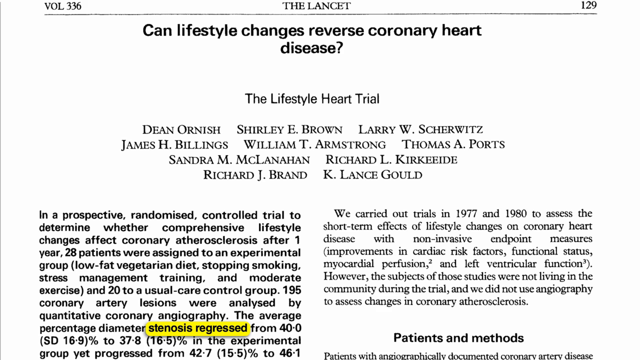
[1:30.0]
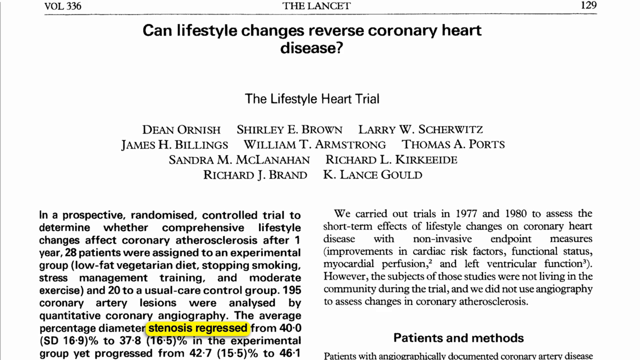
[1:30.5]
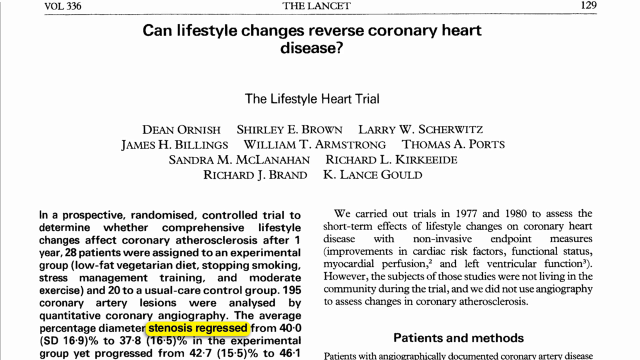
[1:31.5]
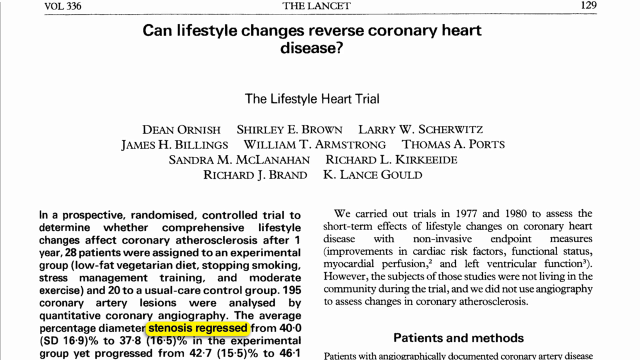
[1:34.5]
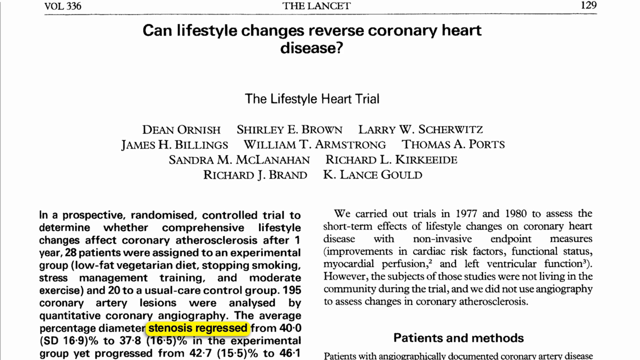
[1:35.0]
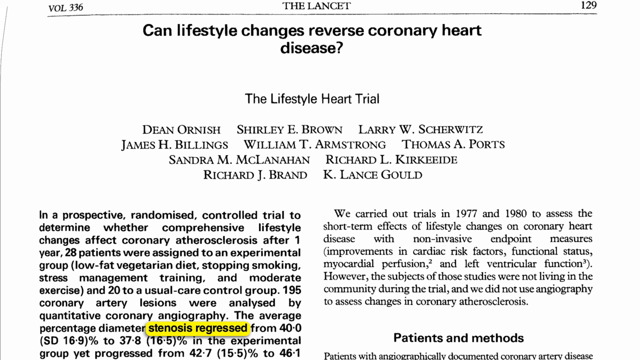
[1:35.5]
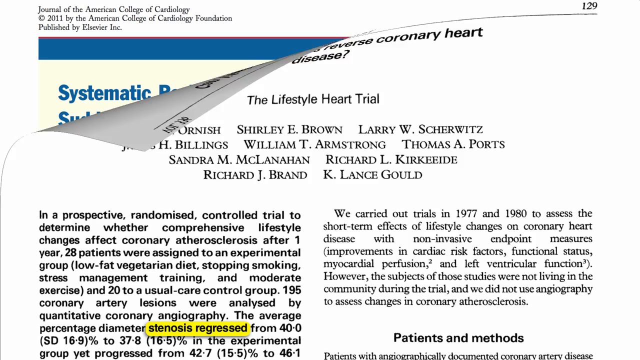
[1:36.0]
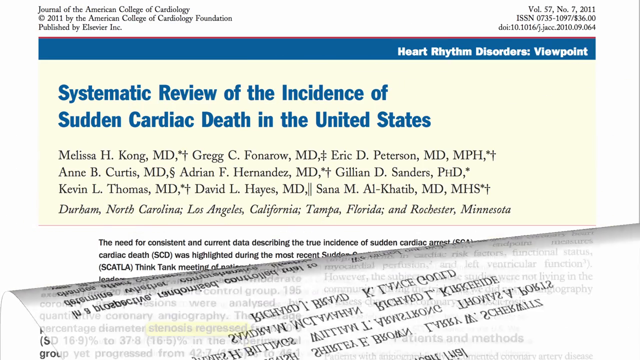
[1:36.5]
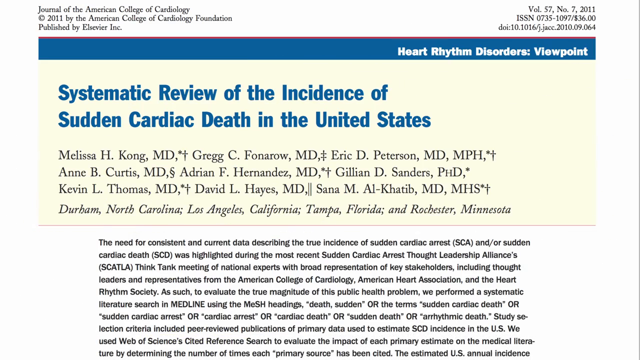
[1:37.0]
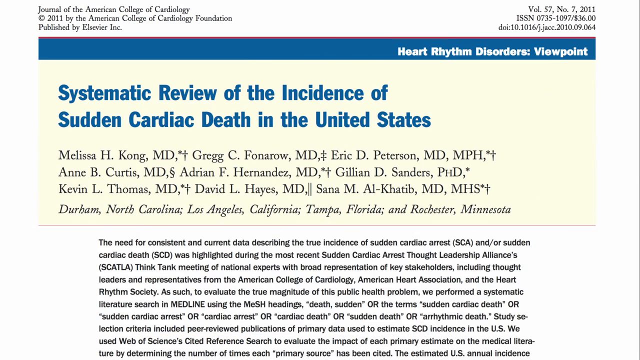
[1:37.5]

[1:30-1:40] The article titled "Can lifestyle changes reverse coronary artery" disease is still shown, then the view flips to the next article, apparently the last of this article. The new title ends "Review of the Incidence of Sudden Cardiac Death in the United States". In the upper left corner is "the Journal of American College of Cardiology", "© 2011 by American College of Cardiology Foundation", and beneath that "Published by" followed by a word beginning with E that cannot be fully read, and "Inc." On the right side is "VOL. 57, NO. 7, 2011", with "ISSN" below it followed by what looks like "0735-1097" and more that cannot be read. Beneath that is a line, only partly readable, that includes 2010 and 9. The body text below is about heart disease.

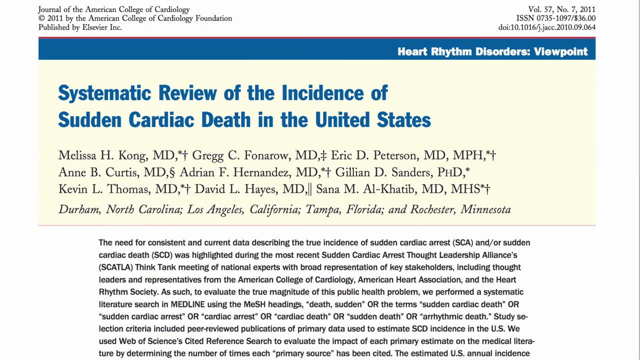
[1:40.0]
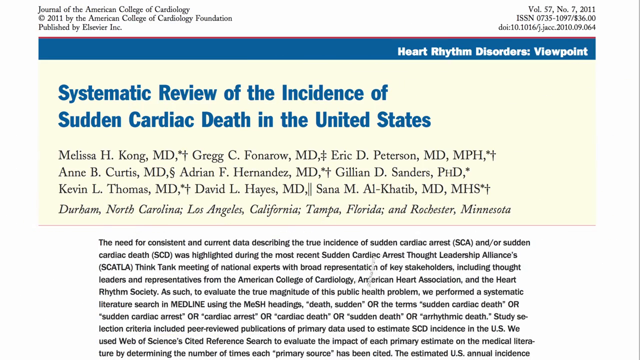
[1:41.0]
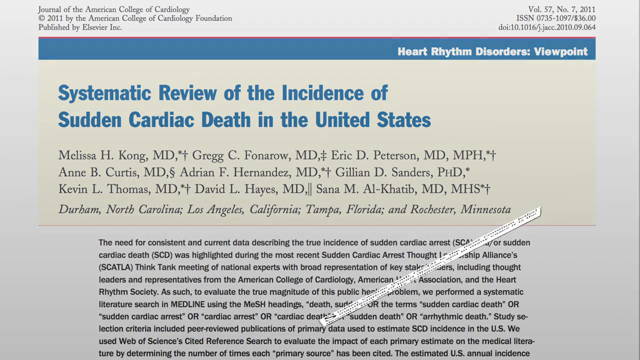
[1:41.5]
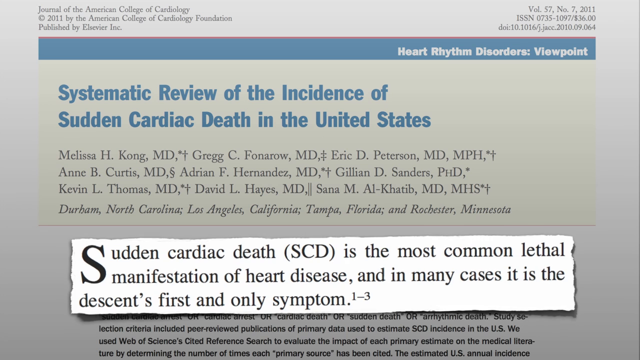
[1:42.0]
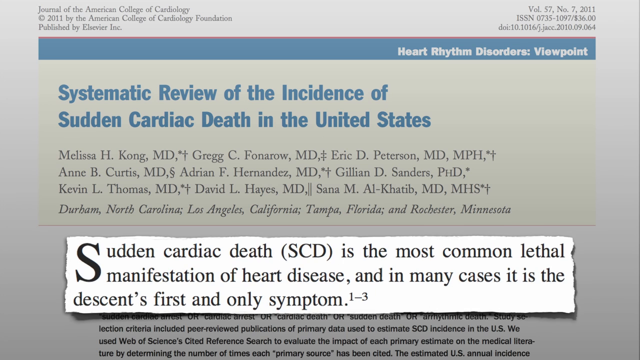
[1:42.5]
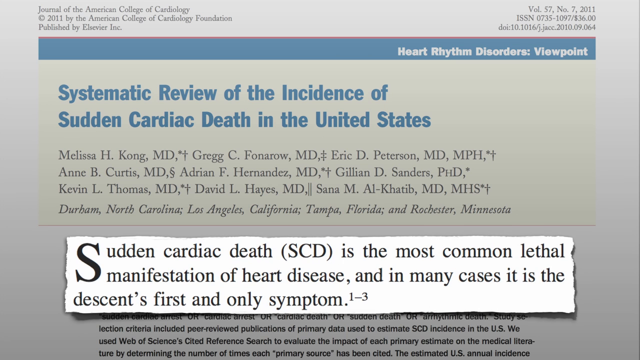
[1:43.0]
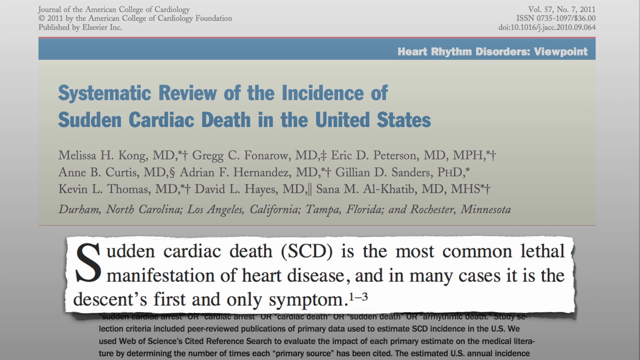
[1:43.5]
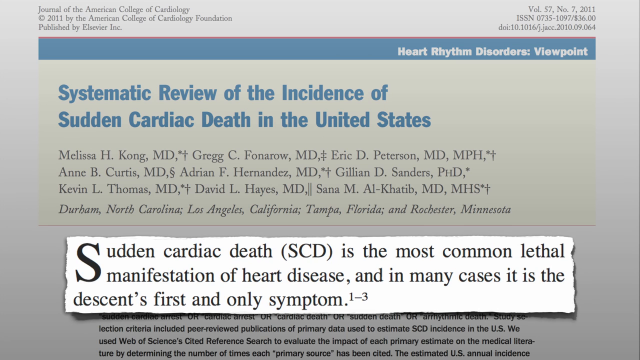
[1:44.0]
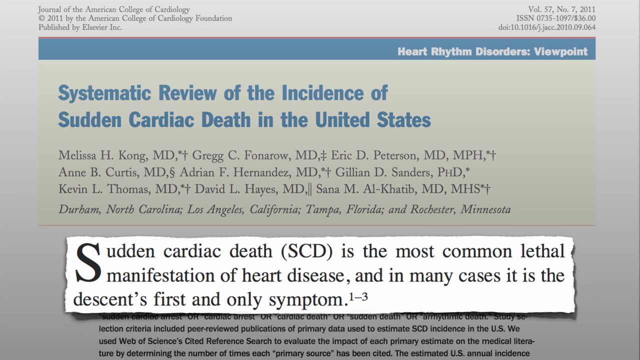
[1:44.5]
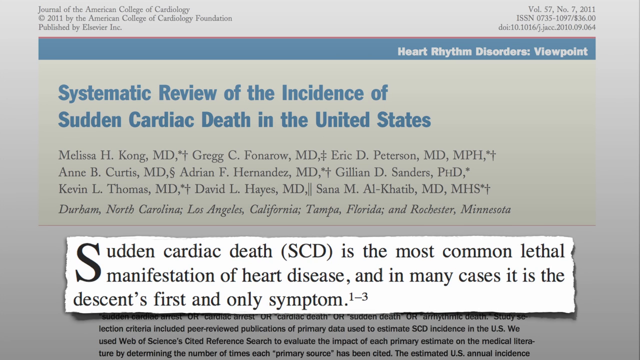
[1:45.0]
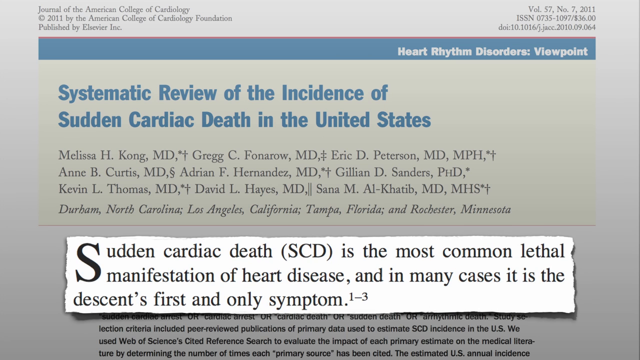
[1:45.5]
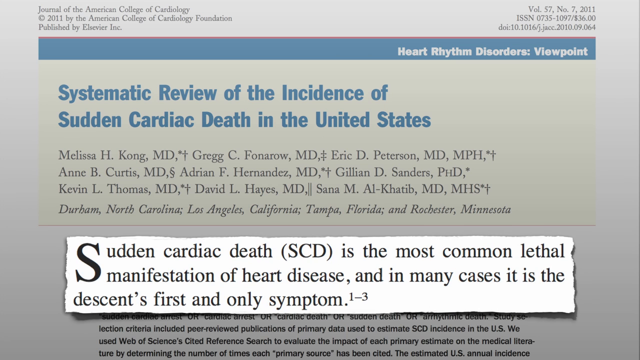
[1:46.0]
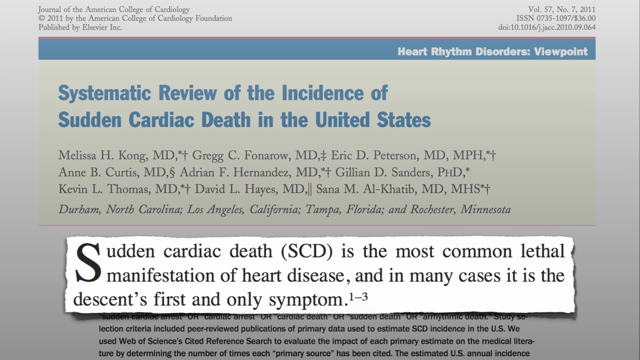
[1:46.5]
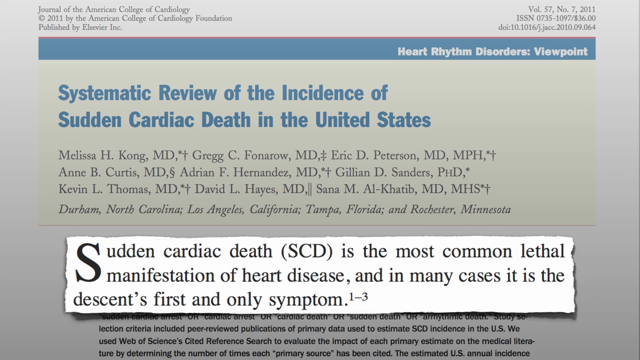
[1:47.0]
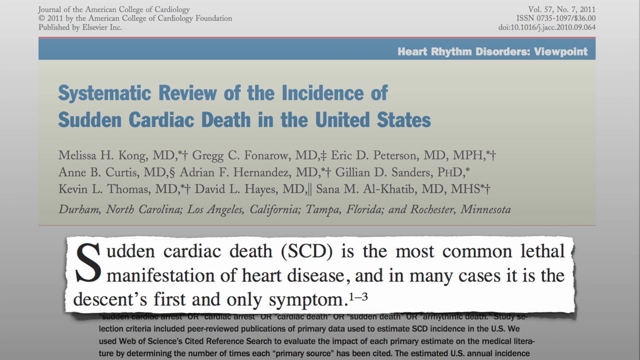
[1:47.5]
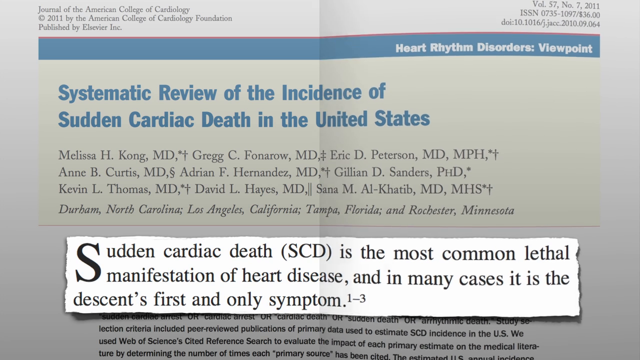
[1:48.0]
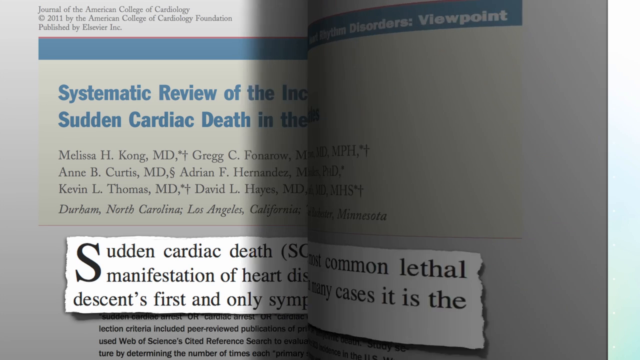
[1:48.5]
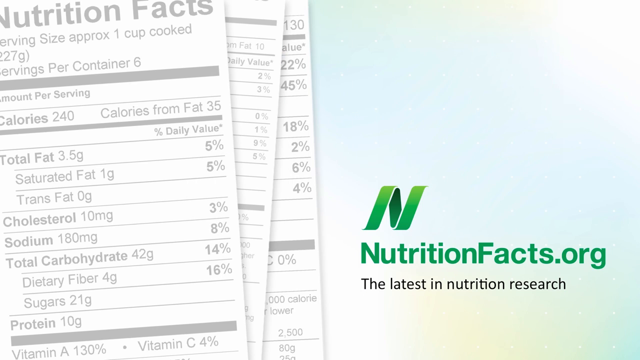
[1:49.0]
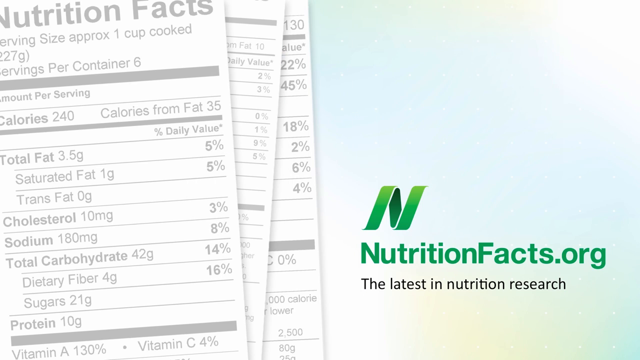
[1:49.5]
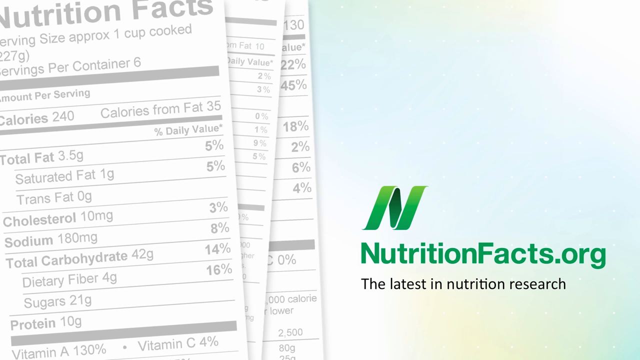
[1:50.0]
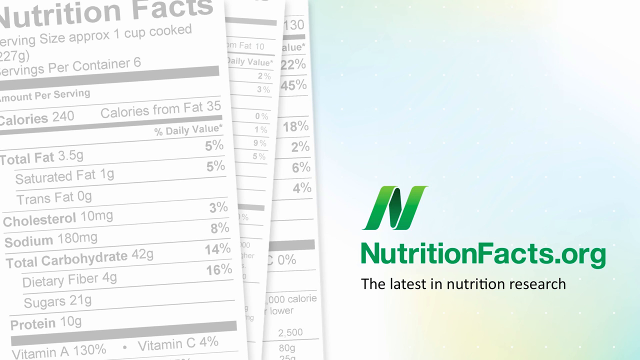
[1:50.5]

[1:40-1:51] The same article title is shown in blue, a systematic review of the incidence of sudden cardiac death in the United States. Black text below reads "the need for consistent and current data describing the true incidence of sudden cardiac arrest (SCA) and/or sudden cardiac death (SCD) was highlighted", mentioning the Sudden Cardiac Arrest Thought Leadership Alliance (SCATLA), "including thought leaders and representatives from the American College of Cardiology, American Heart Association, and American Heart Rhythm Society", and "we perform a systematic literature search" in MEDLINE. It then reads "Sudden cardiac death is the most common lethal manifestation of heart disease", describing it in many cases as the first and only symptom.